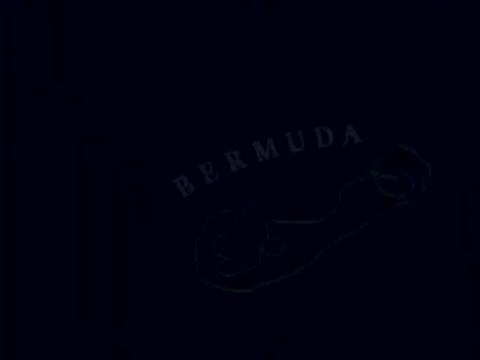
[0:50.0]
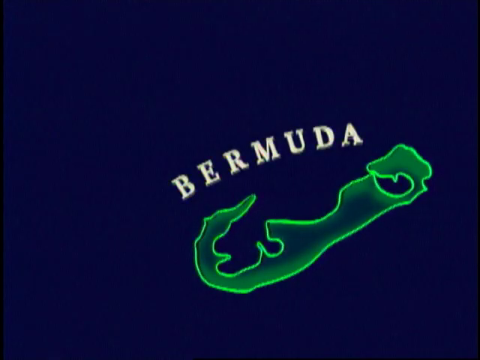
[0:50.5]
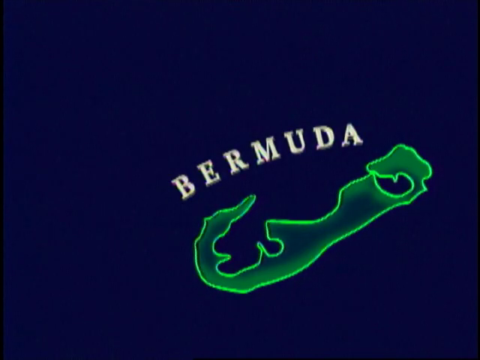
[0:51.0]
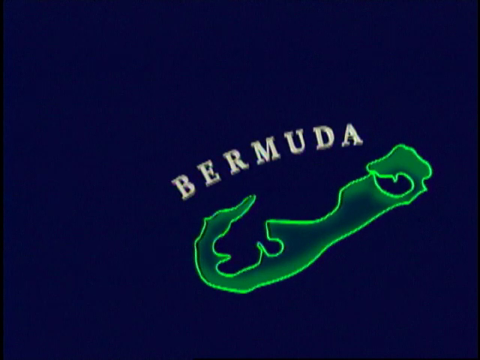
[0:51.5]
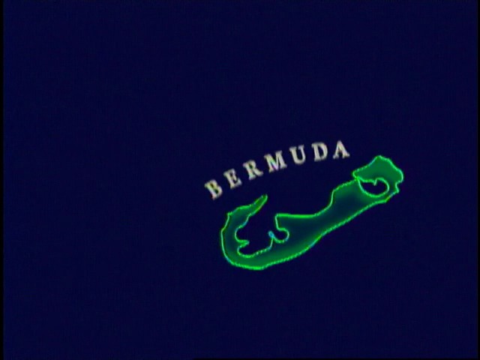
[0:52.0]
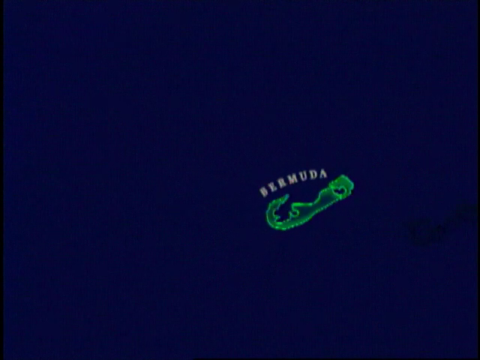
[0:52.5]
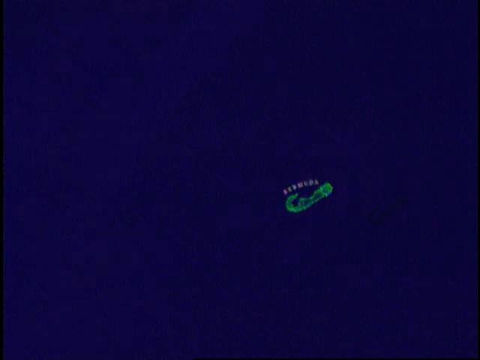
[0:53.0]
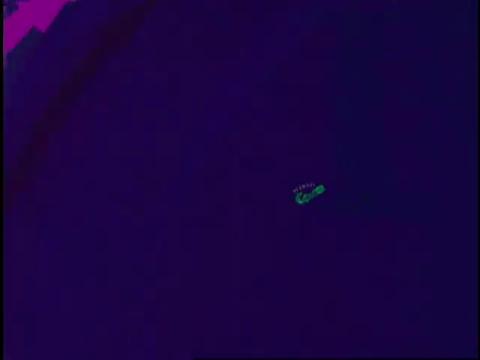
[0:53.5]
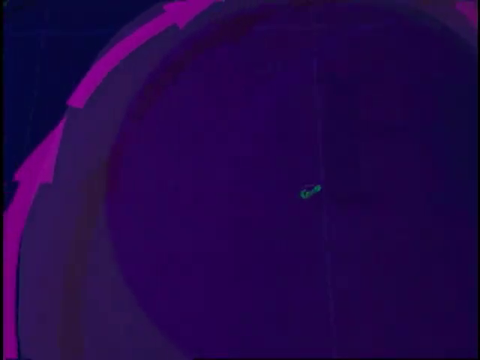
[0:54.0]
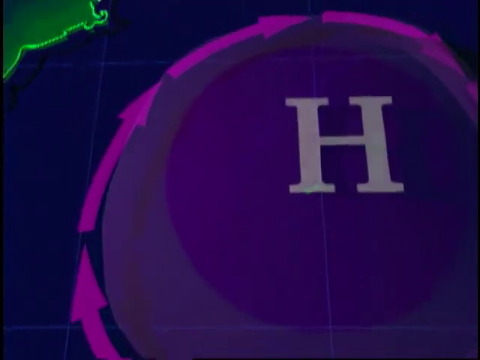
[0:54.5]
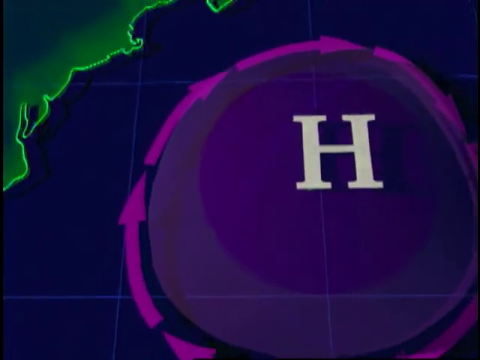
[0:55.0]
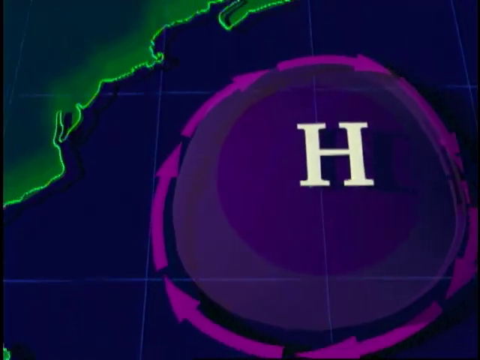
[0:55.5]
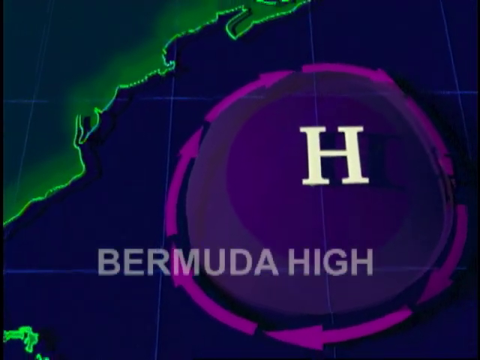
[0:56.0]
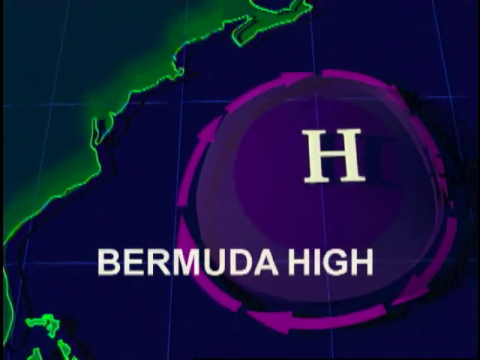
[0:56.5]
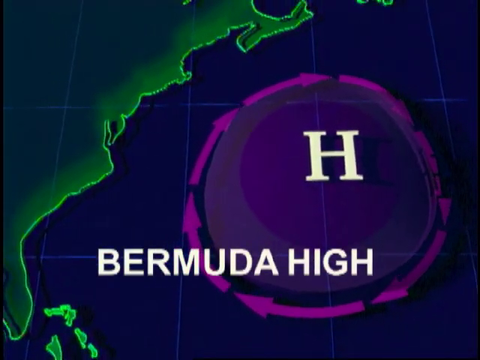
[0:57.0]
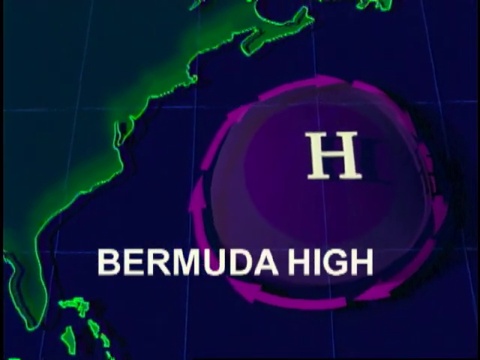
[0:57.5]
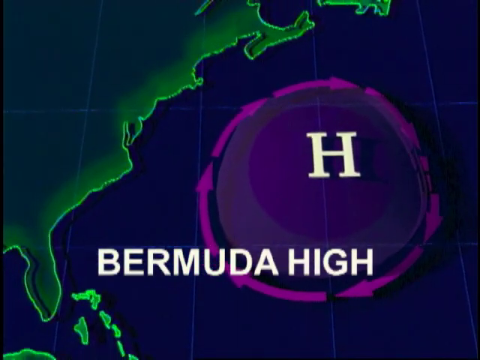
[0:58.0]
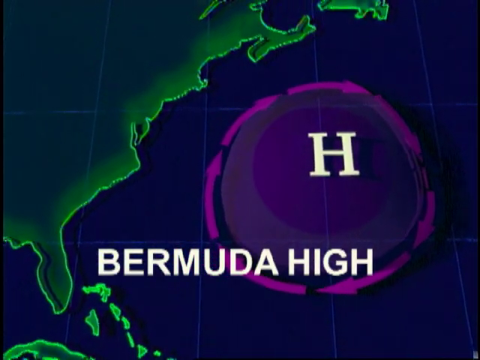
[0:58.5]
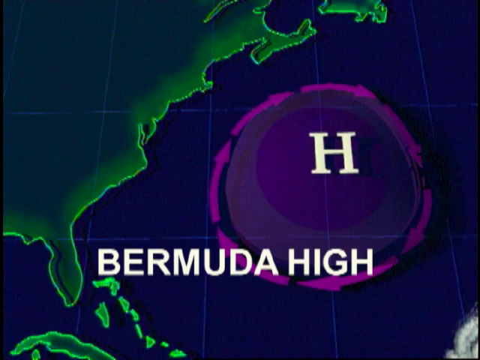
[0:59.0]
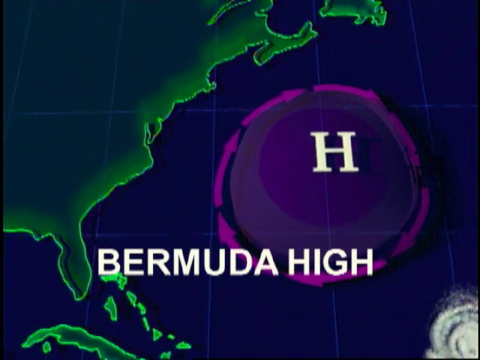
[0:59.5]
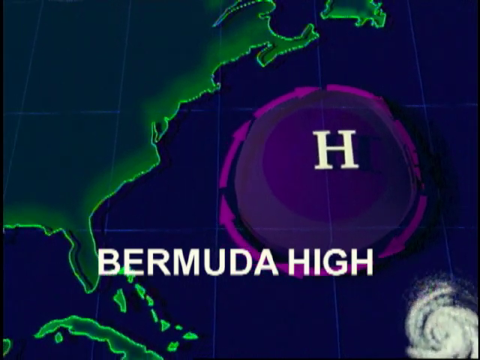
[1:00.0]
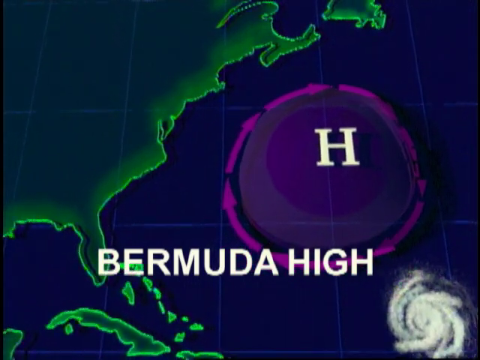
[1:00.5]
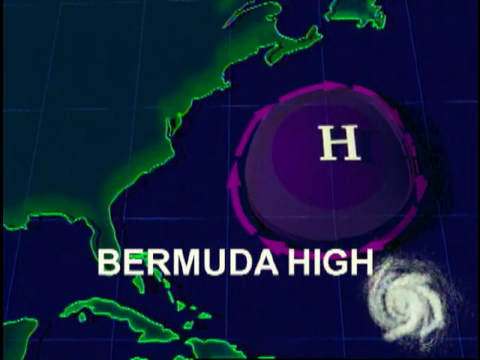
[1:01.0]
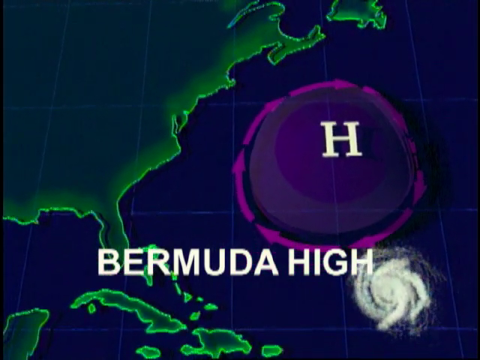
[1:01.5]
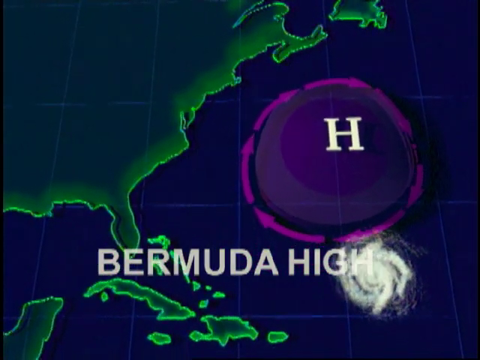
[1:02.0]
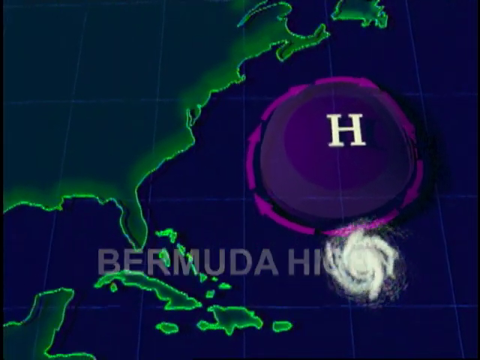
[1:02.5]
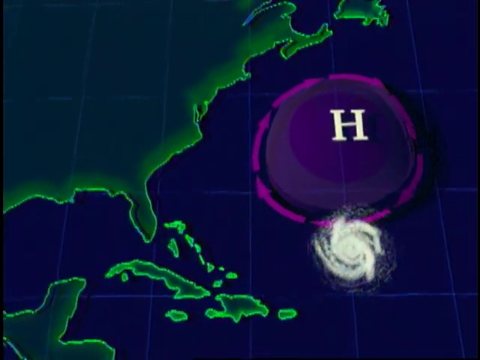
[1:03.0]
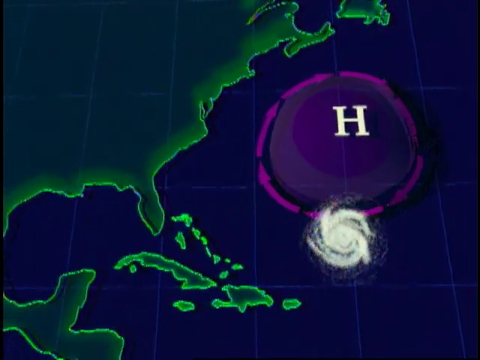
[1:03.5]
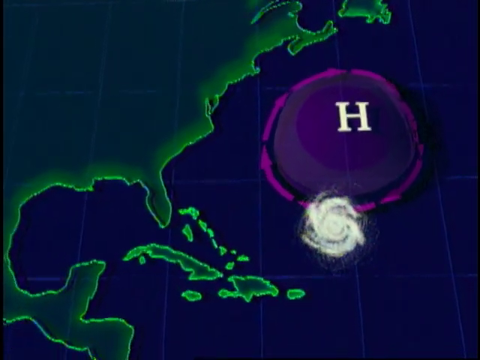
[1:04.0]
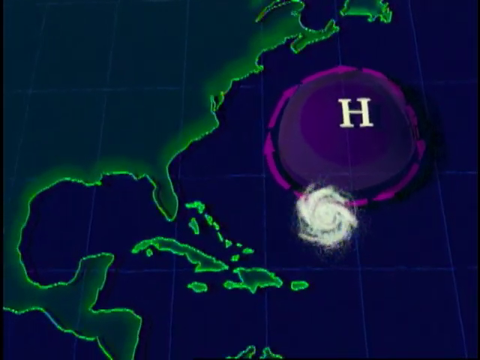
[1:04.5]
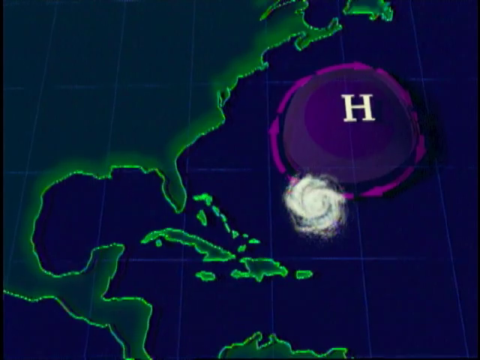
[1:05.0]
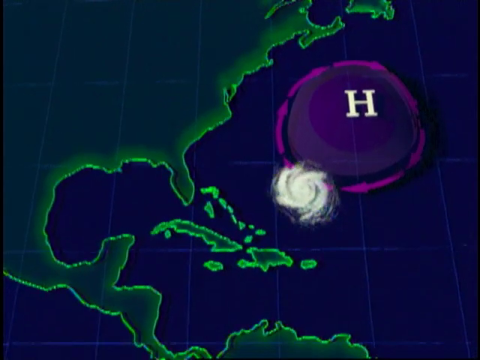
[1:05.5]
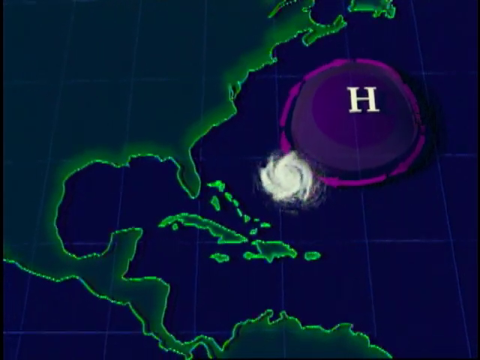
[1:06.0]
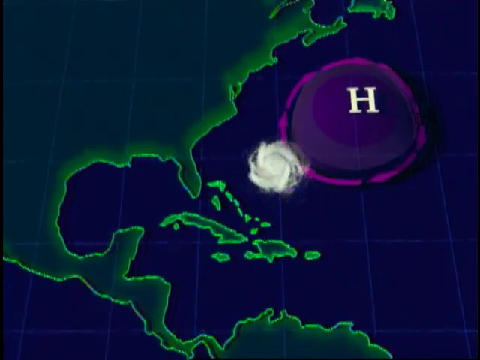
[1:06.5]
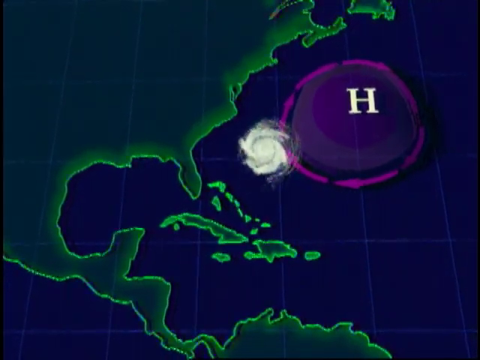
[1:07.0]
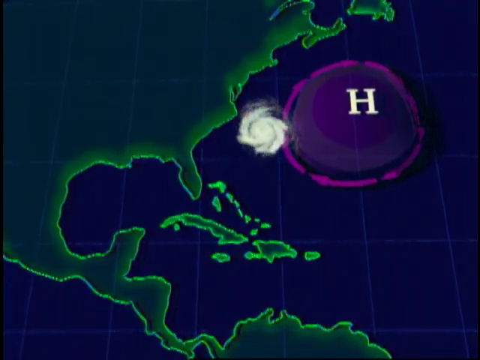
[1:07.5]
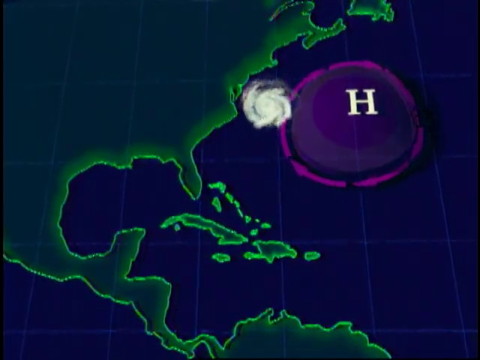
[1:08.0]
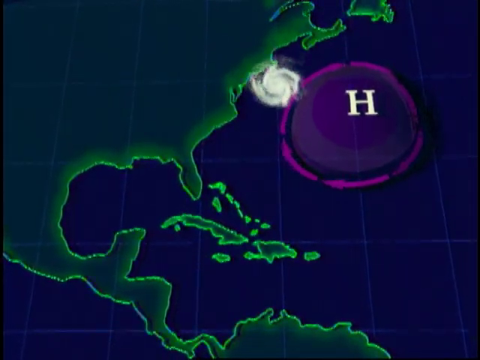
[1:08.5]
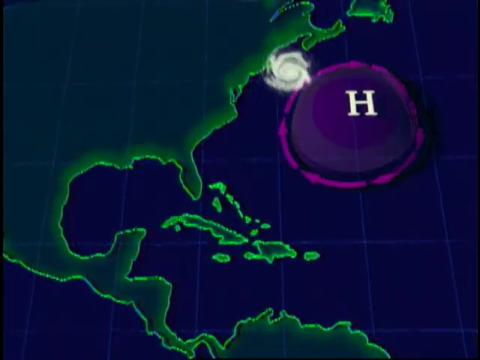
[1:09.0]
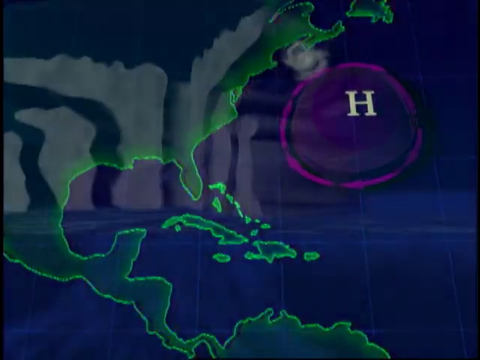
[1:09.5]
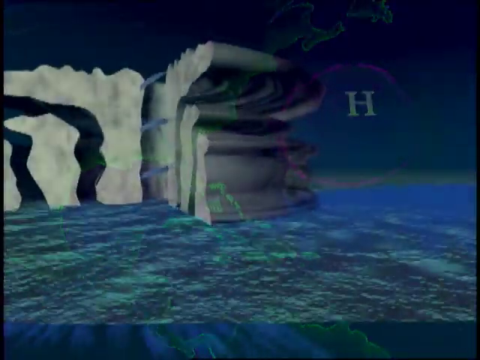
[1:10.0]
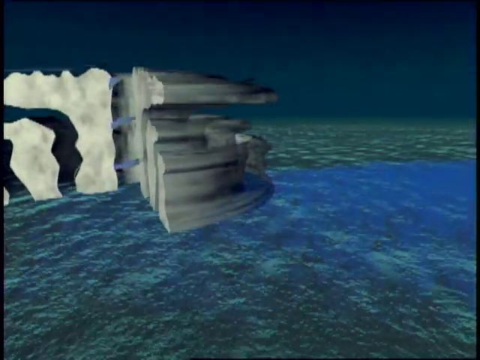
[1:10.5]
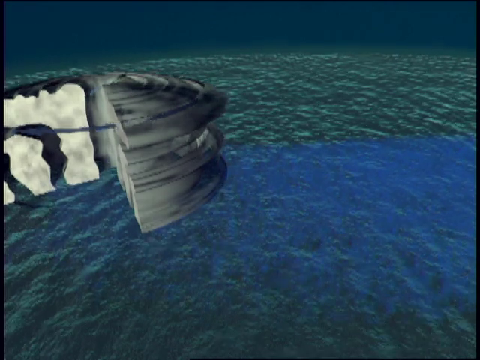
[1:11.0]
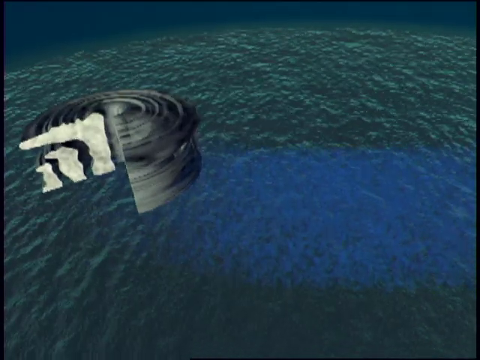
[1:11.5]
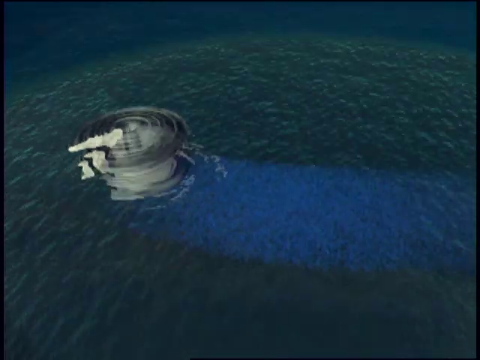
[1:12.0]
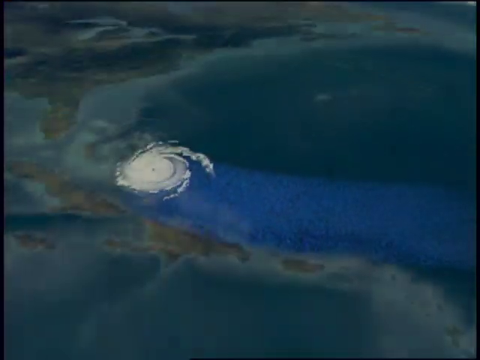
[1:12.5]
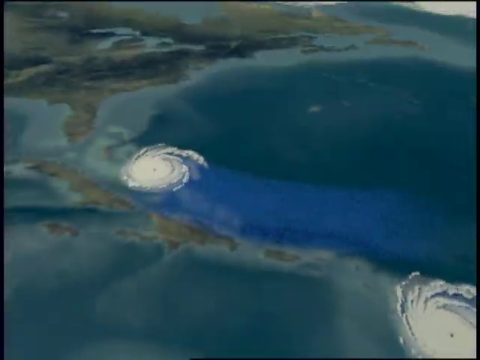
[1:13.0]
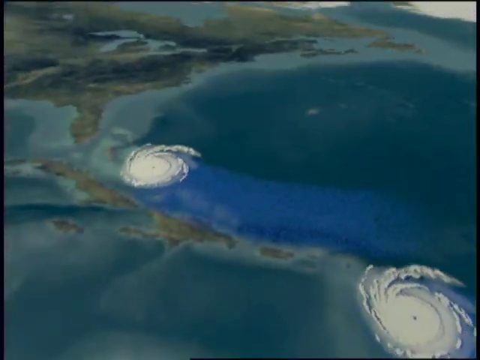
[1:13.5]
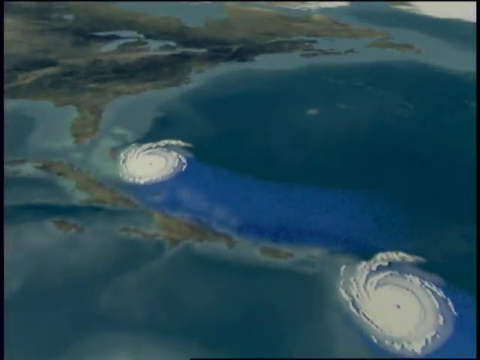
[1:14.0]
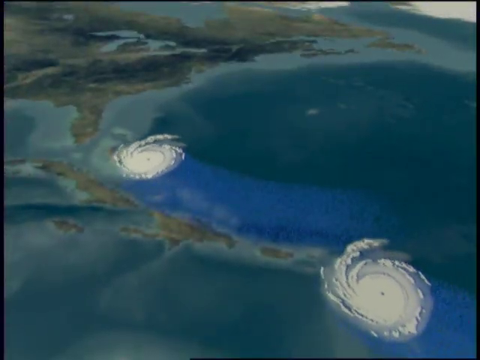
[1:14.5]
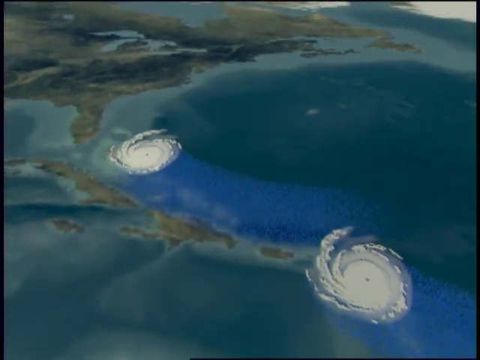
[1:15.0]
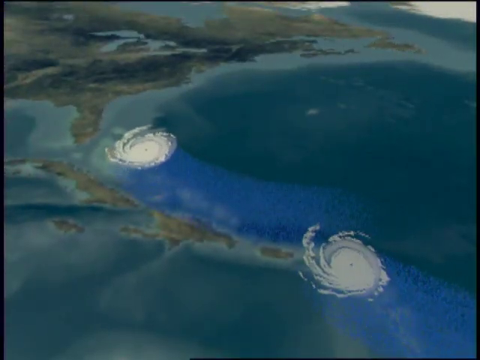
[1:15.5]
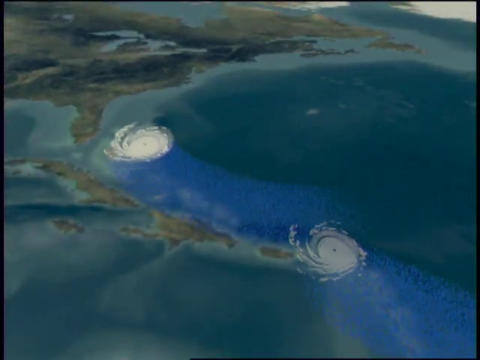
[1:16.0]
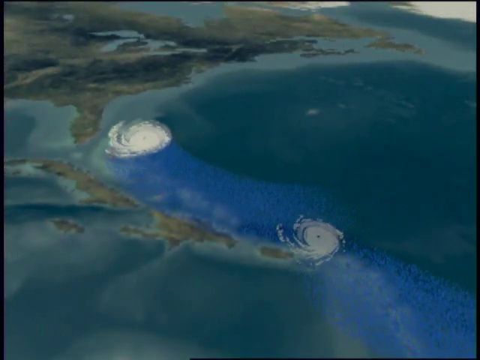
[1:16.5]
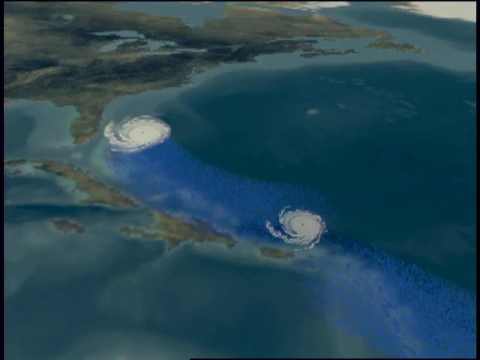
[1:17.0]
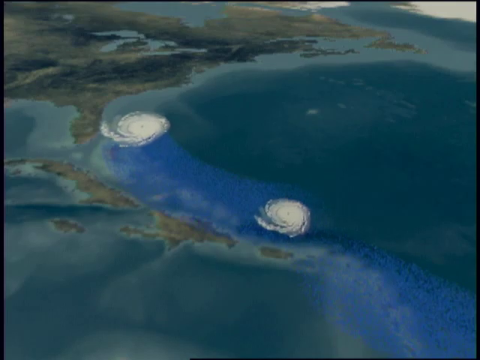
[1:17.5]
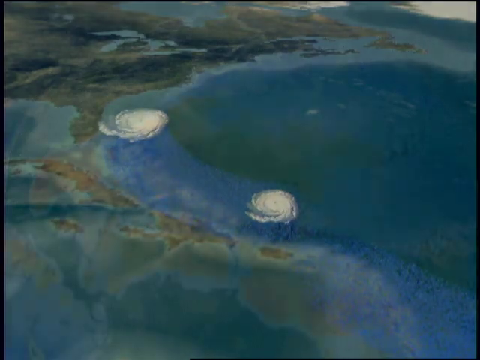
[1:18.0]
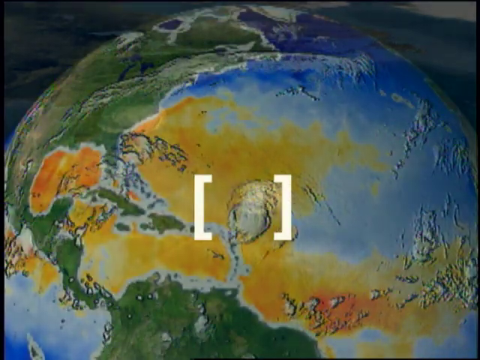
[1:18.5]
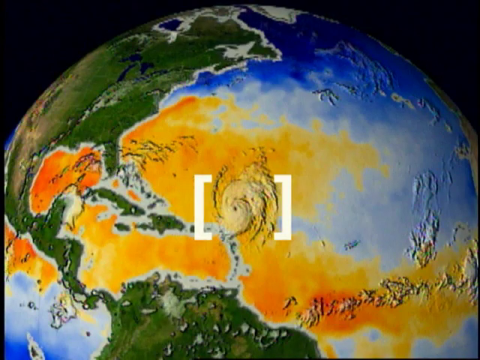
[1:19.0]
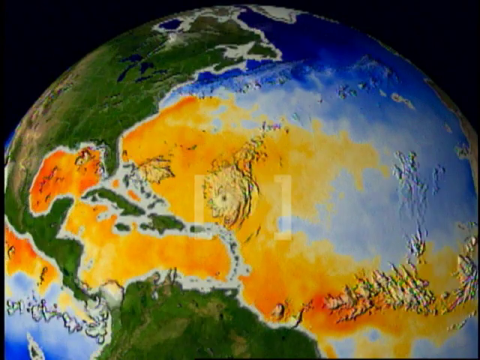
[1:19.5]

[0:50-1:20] A drawing, not a photo, represents the island of Bermuda. The island is outlined in a glowing green with hues of green over it, and the rest of the image is blue. The word "Bermuda" appears in white letters, curving from left to right above the island. The image gets smaller, like a camera zooming out, revealing a purple circle with purple arrows turning to the right around it and "Bermuda High" in white letters below the circle. Then an apparent hurricane of white spinning clouds comes up and goes across the east coast and around the purple lines. The view switches to a screen showing America and the Atlantic Ocean with two hurricanes, then to a screen of the Atlantic Ocean and the east coast of America showing warm waters around Florida that sort of swoop out toward the right of the image, depicted in hues of red and orange.